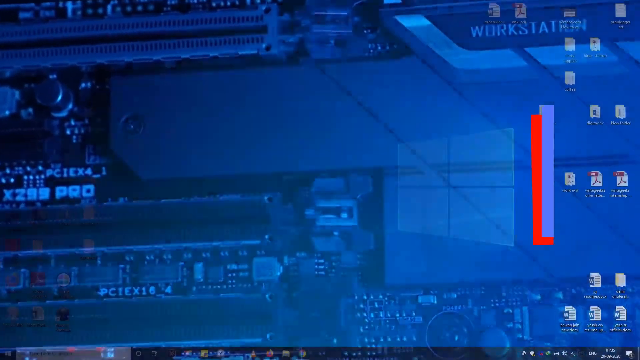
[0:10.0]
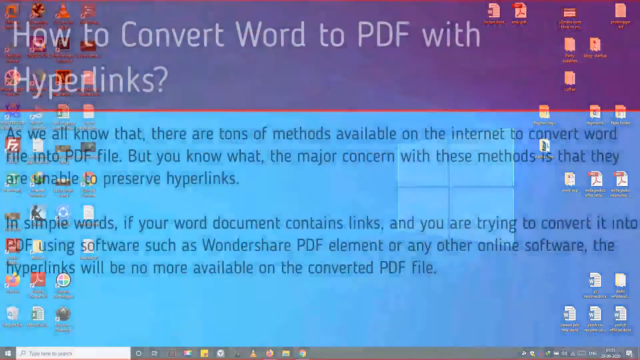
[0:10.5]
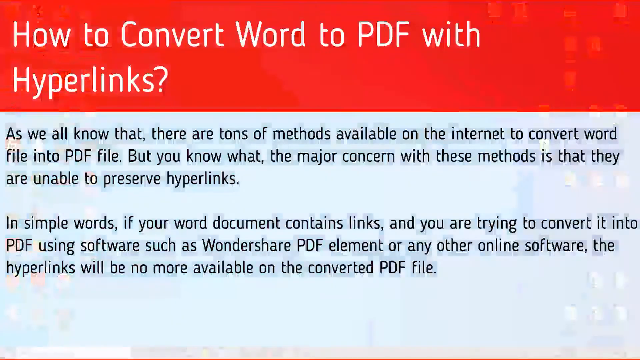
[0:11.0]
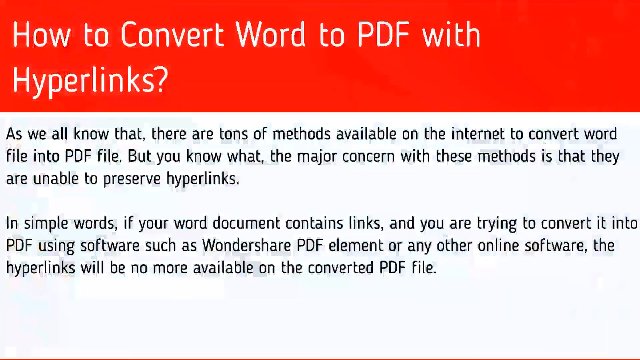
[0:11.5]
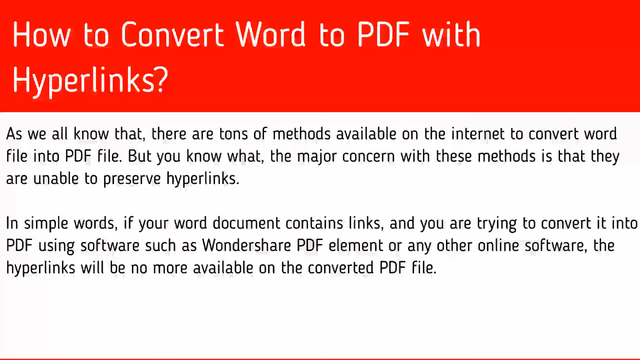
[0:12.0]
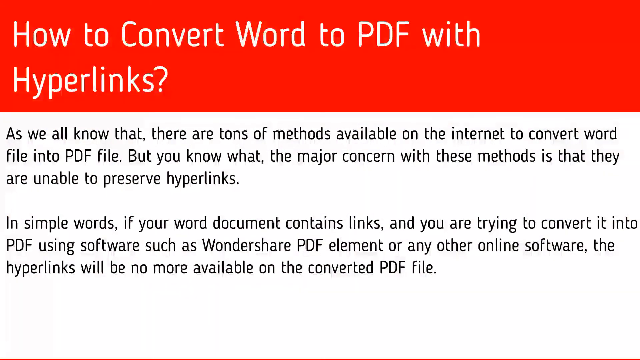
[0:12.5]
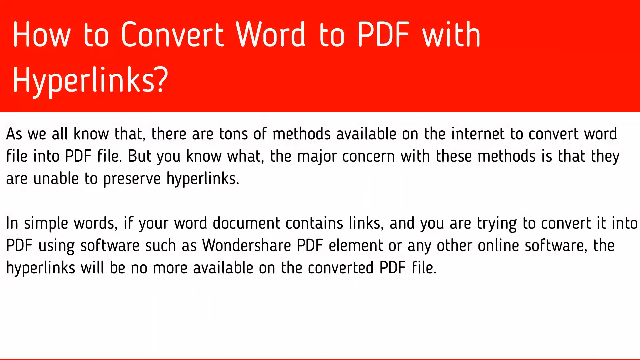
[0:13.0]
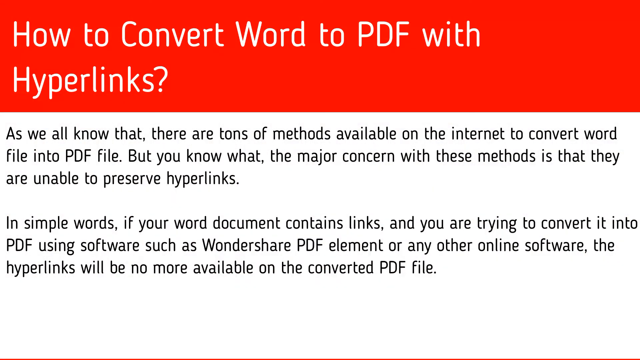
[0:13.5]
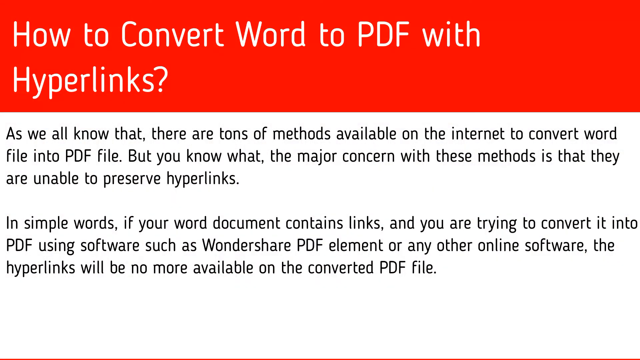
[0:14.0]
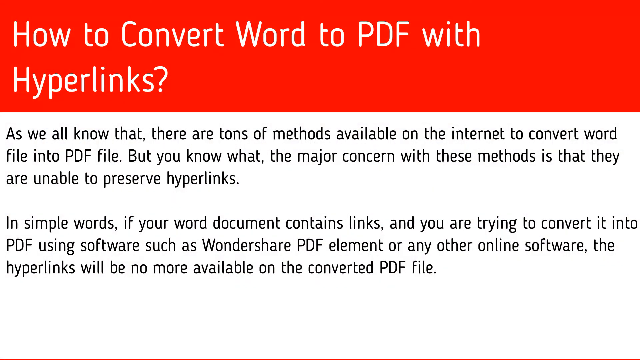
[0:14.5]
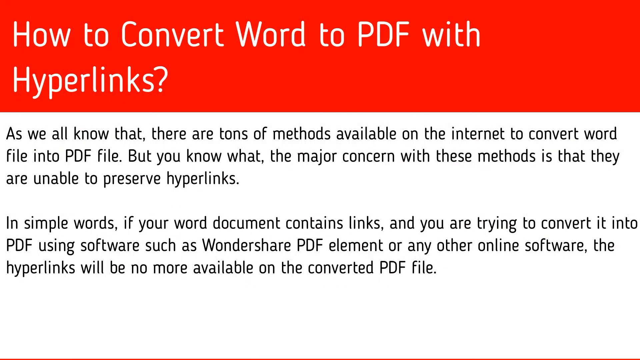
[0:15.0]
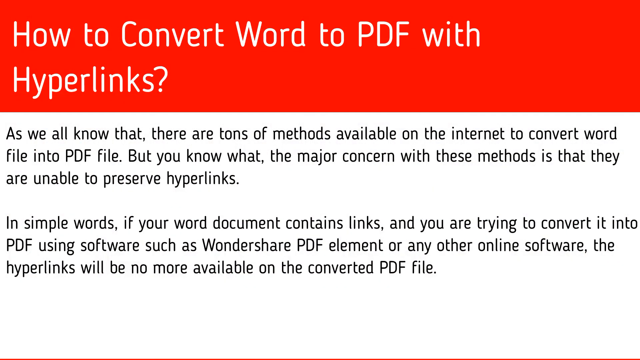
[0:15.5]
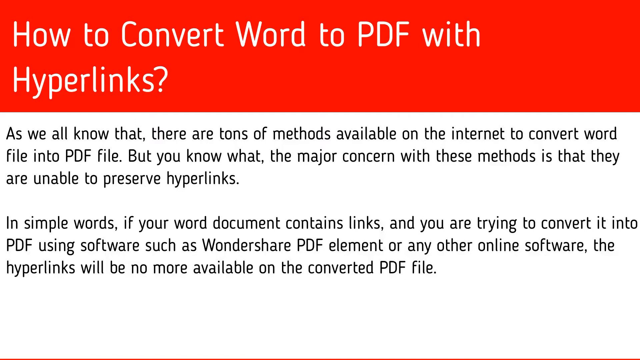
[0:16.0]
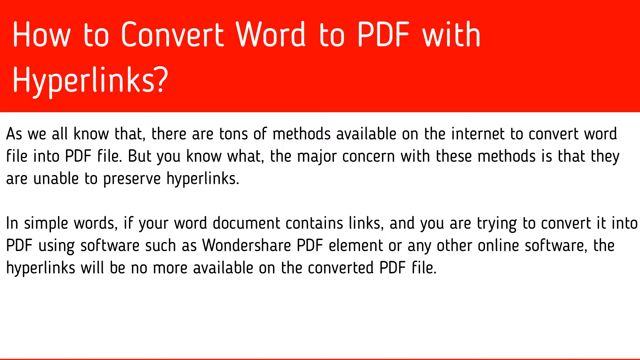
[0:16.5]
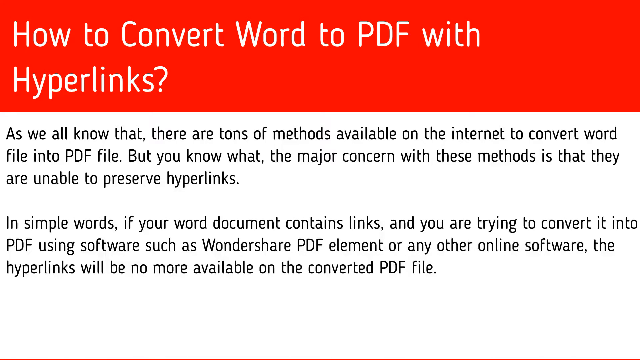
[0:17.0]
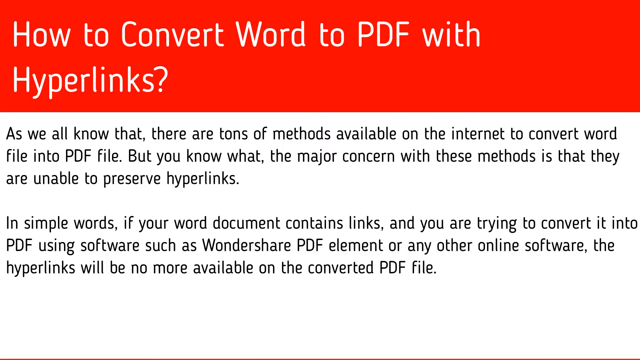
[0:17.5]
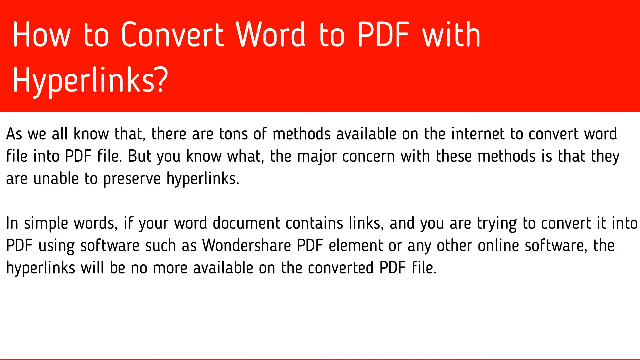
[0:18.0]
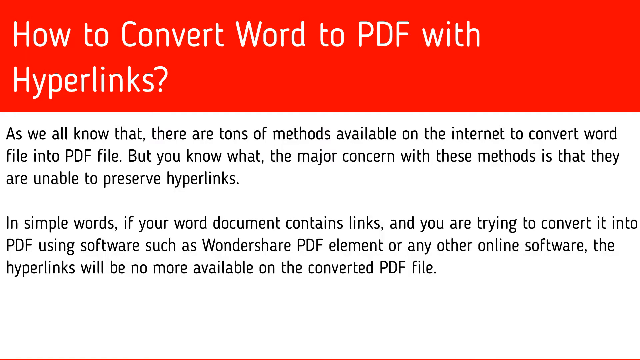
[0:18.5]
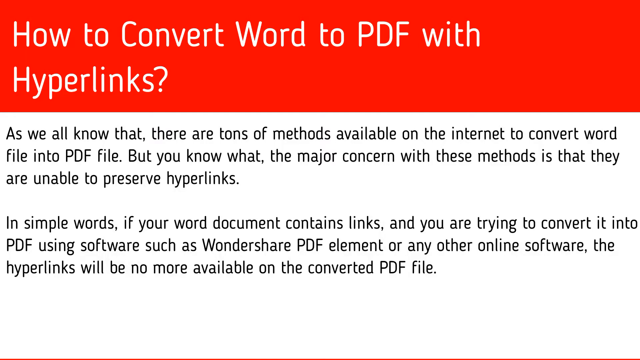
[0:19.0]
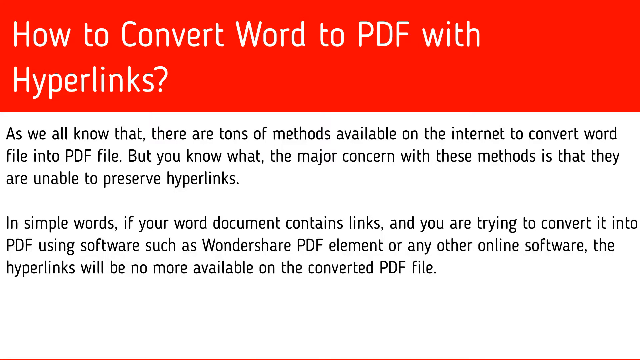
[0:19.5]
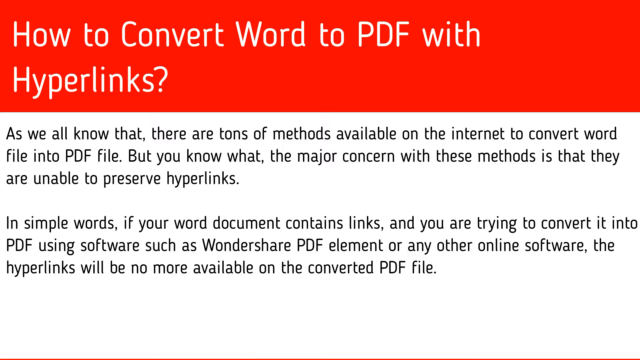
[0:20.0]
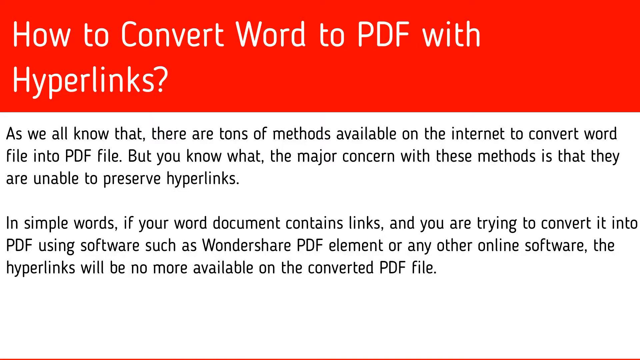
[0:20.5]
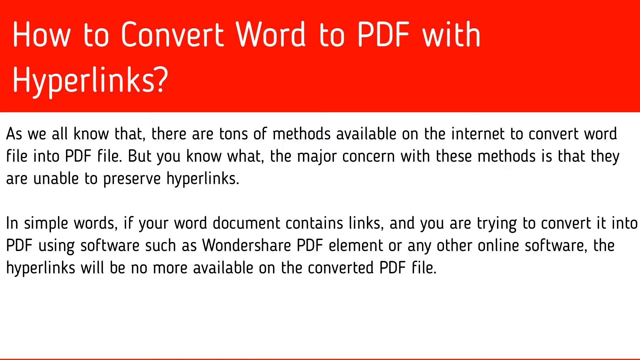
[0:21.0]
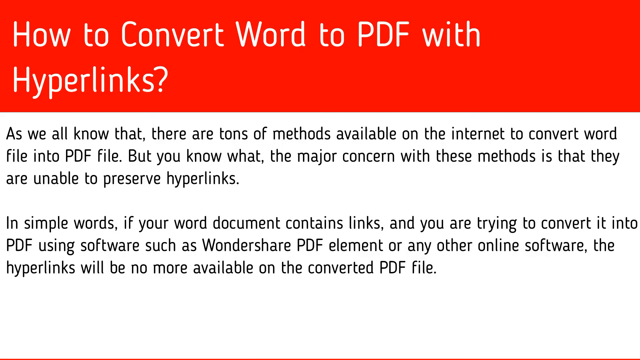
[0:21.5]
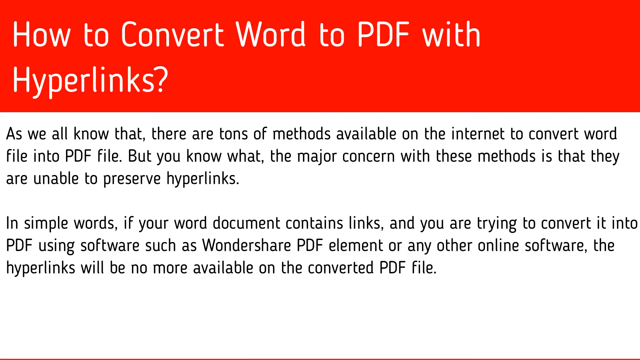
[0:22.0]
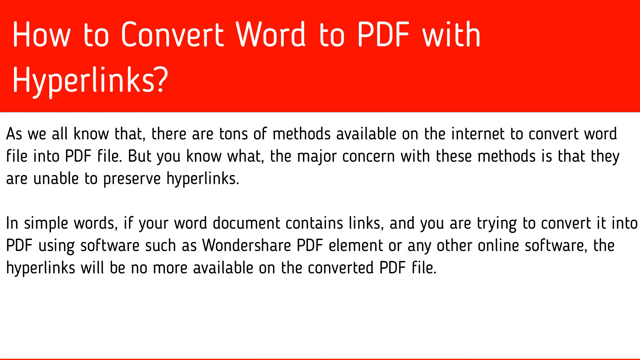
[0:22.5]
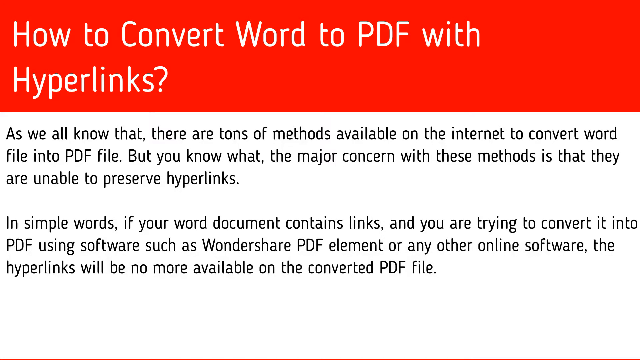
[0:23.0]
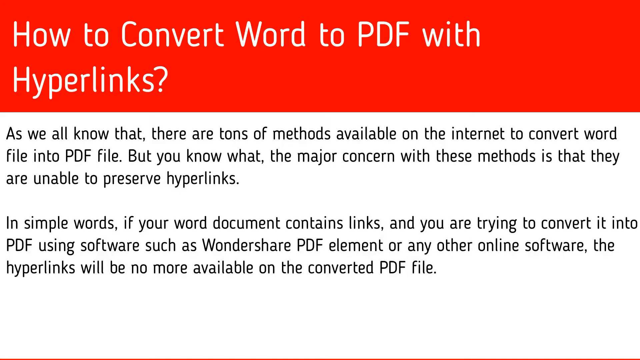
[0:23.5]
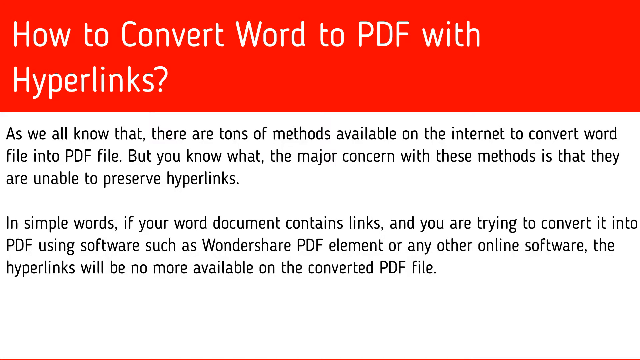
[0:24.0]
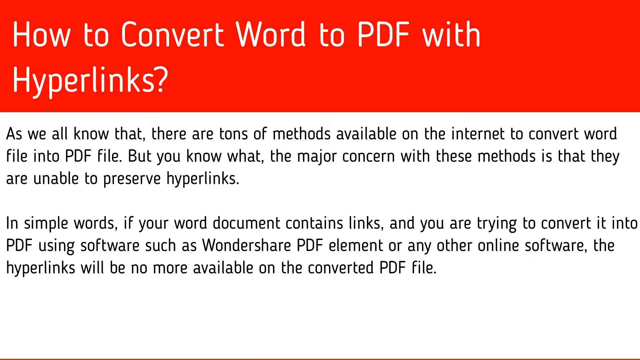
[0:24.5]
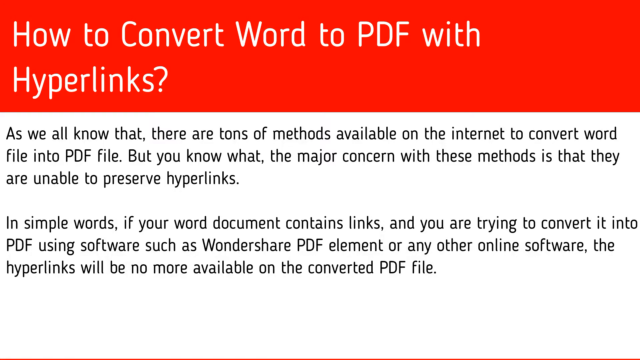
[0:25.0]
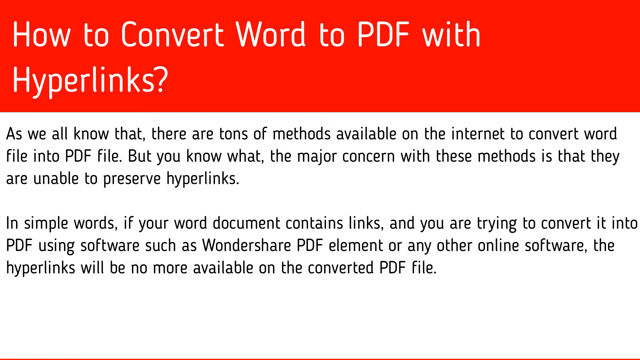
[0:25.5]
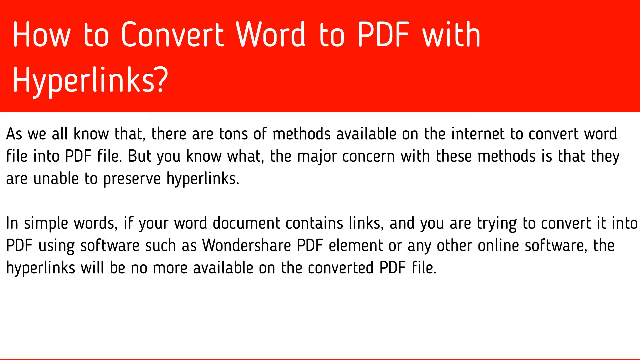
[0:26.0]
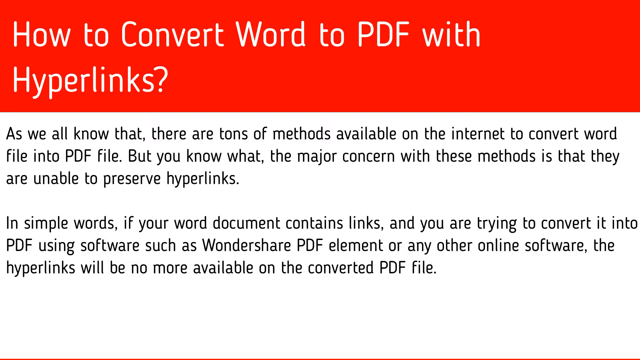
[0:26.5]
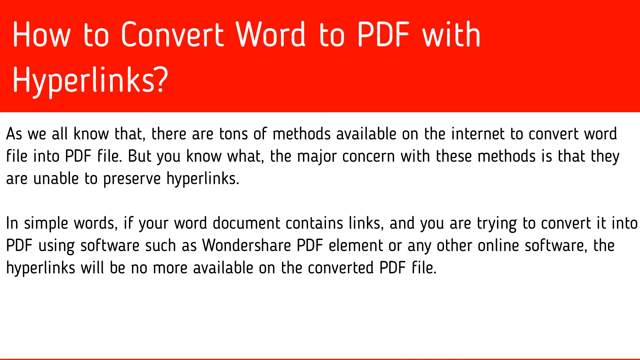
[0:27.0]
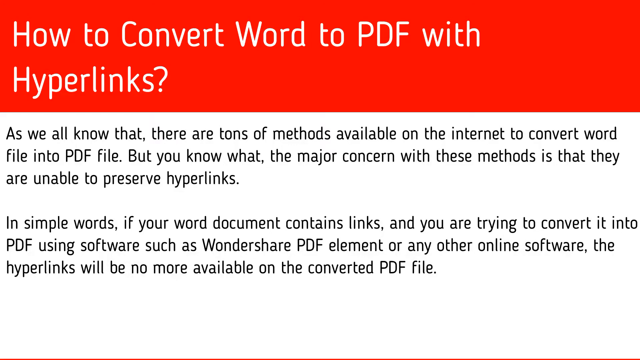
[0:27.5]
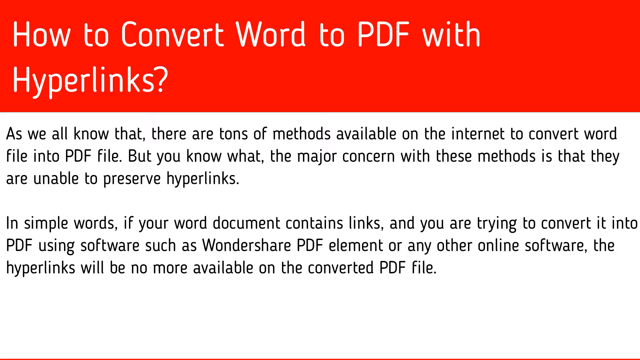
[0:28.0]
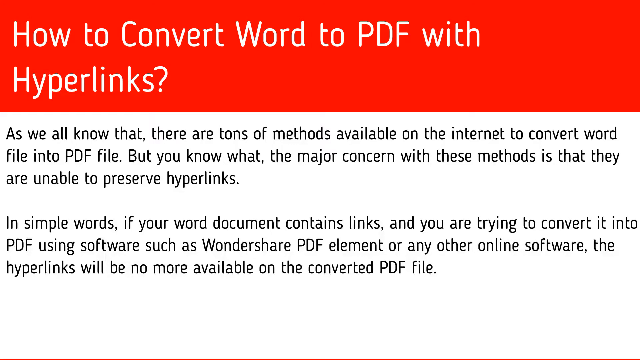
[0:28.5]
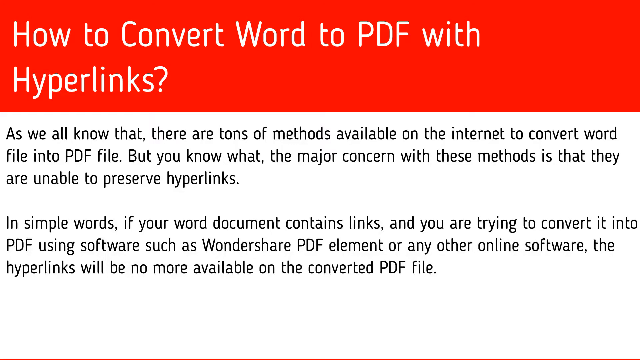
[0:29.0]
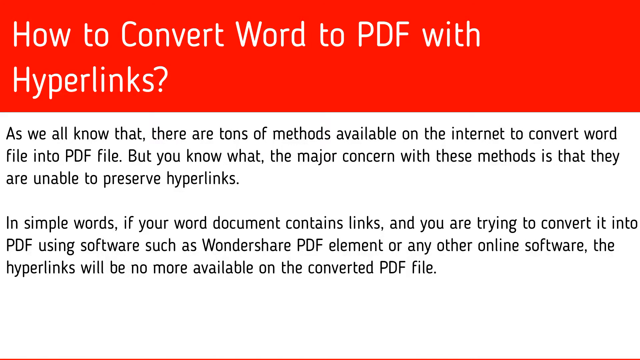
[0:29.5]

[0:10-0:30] A Windows desktop with lots of icons quickly fades into a PowerPoint slide. At the top, a red rectangle spans the top of the screen with white text reading "how to convert Word to PDF with hyperlinks". At the bottom are two lines of black text on a white background reading "as we all know that there are tons of methods available on the internet to convert Word file into a PDF file, but you know what? The major concern with these methods is that they are unable to preserve hyperlinks. In simple words, if your Word document contains links and you are trying to convert it into PDF using software such as Wondershare PDF Element or any other online software, the hyperlinks will be no more available on the converted PDF file."